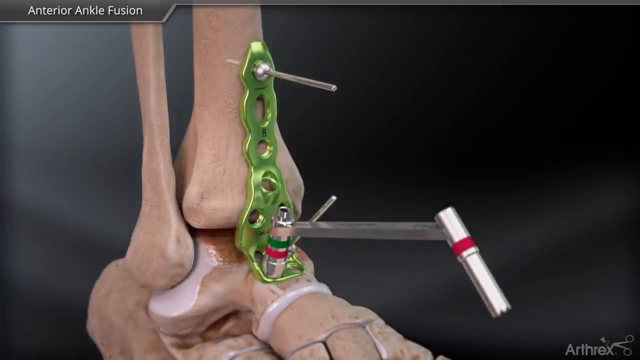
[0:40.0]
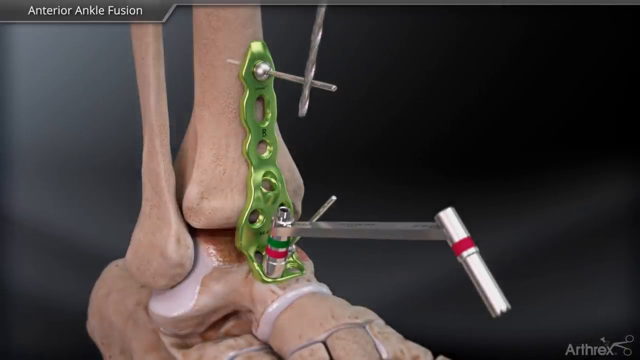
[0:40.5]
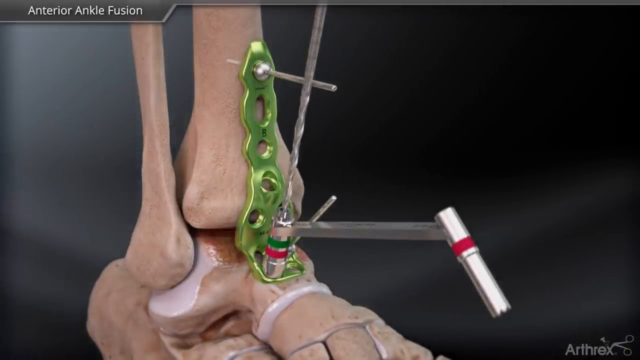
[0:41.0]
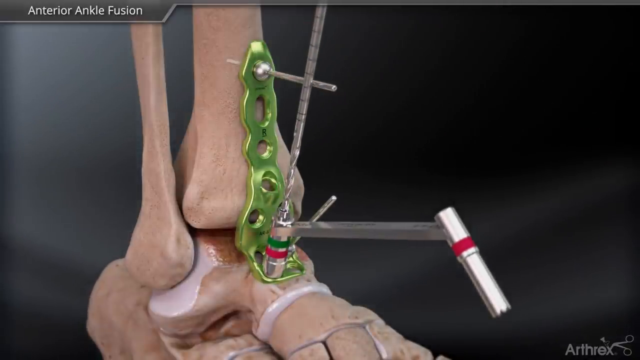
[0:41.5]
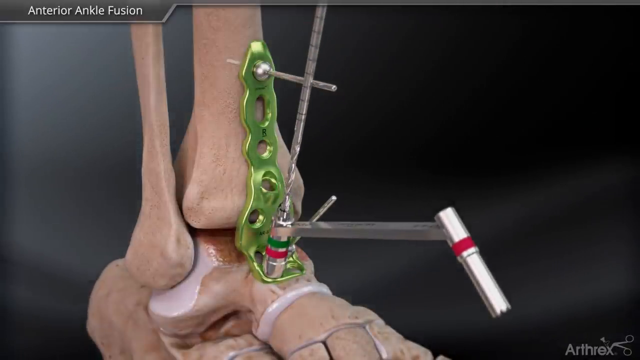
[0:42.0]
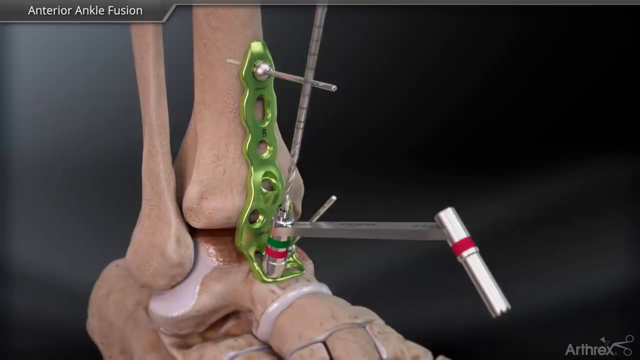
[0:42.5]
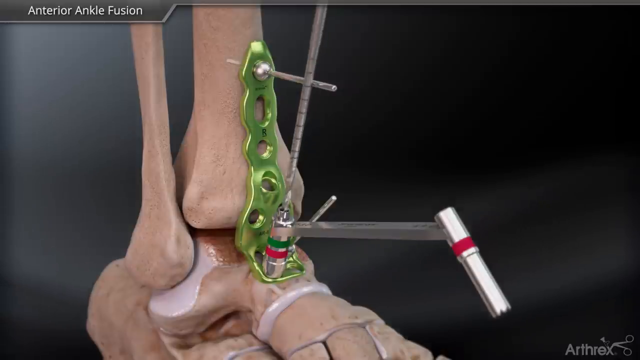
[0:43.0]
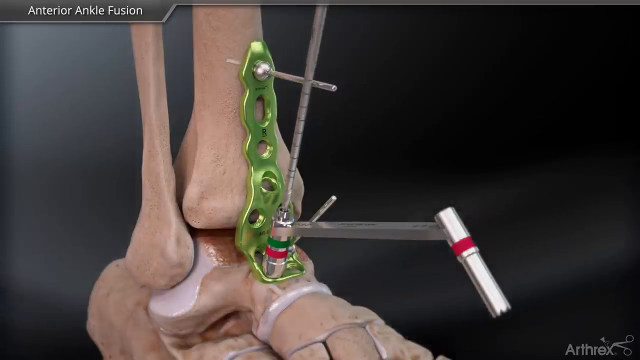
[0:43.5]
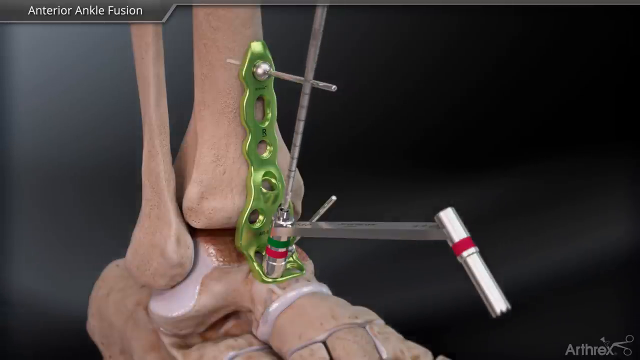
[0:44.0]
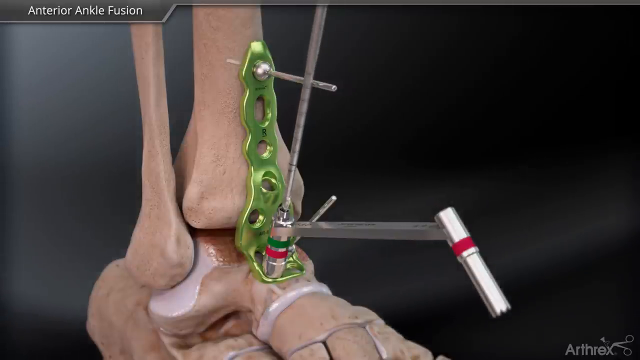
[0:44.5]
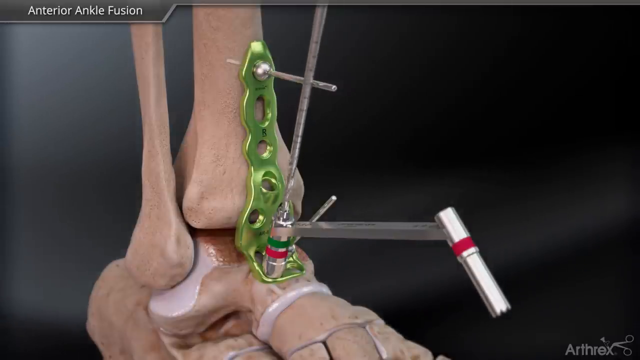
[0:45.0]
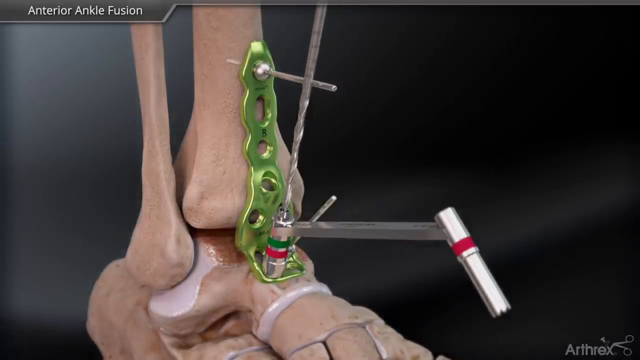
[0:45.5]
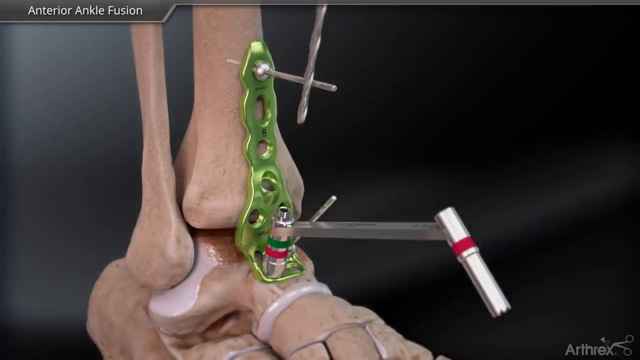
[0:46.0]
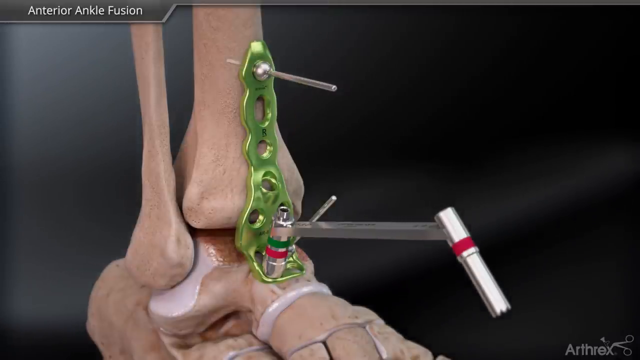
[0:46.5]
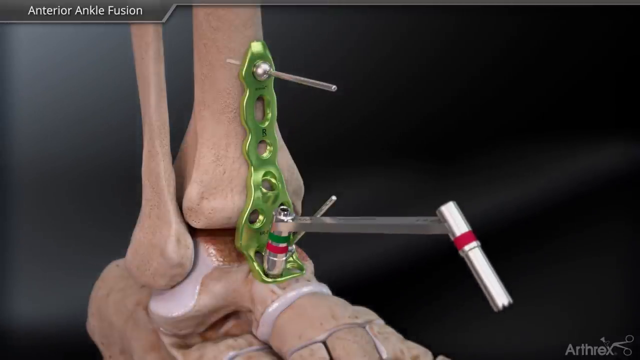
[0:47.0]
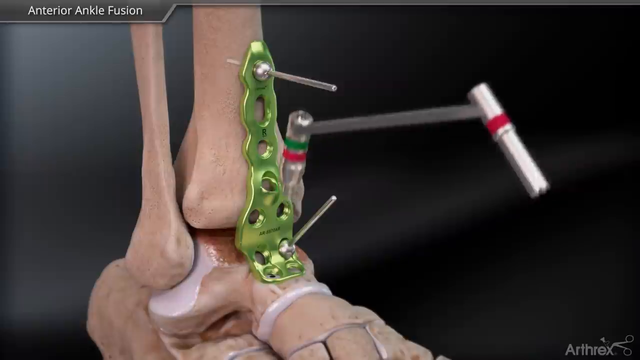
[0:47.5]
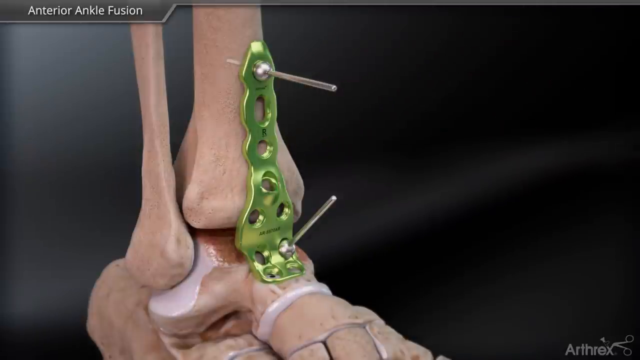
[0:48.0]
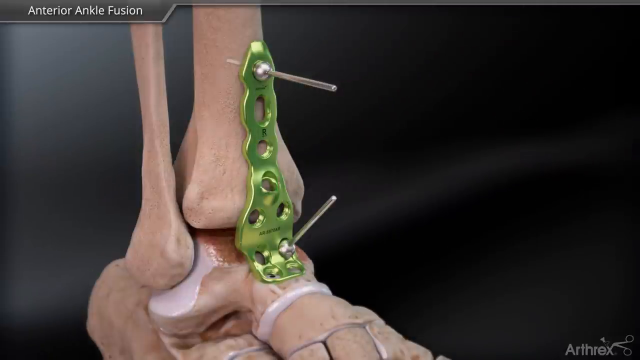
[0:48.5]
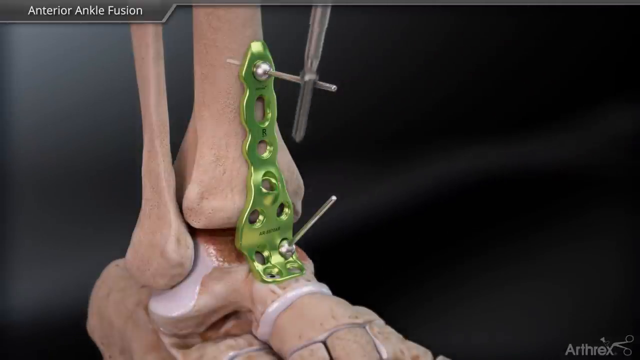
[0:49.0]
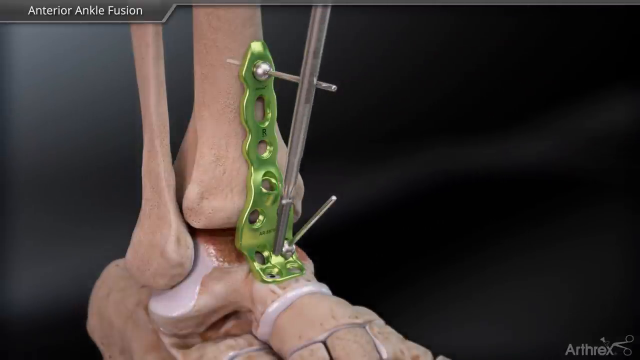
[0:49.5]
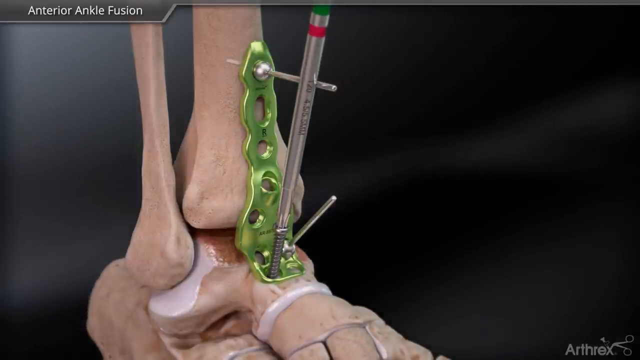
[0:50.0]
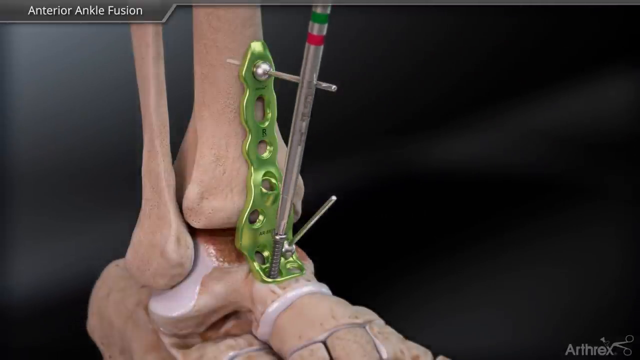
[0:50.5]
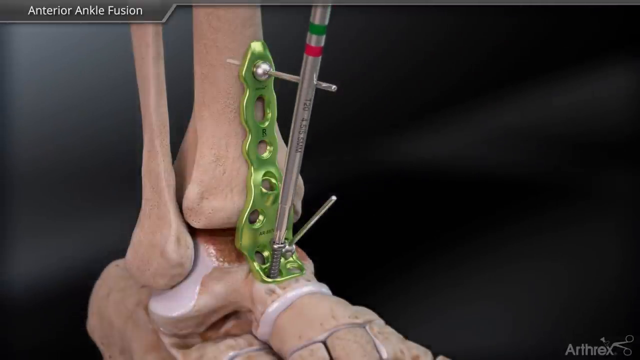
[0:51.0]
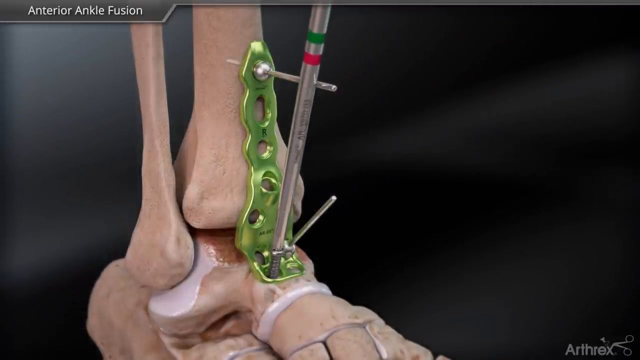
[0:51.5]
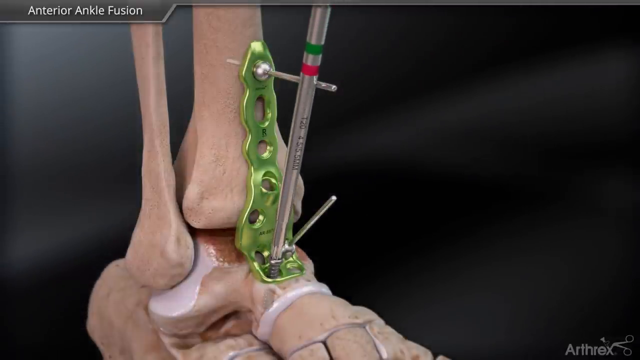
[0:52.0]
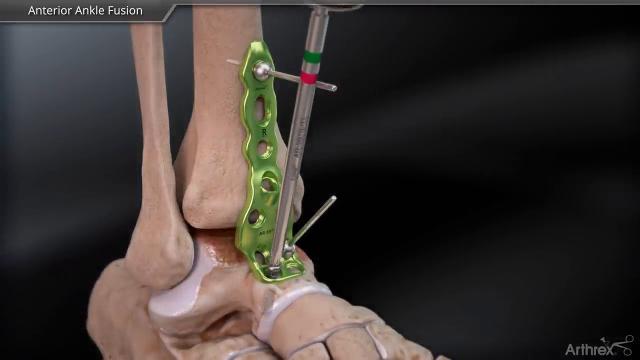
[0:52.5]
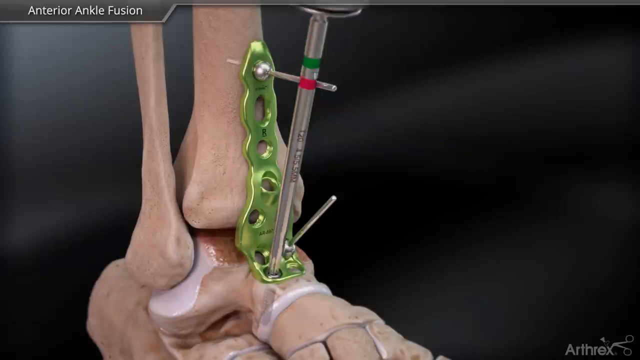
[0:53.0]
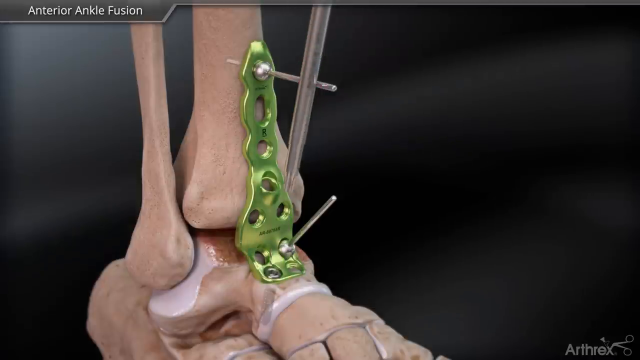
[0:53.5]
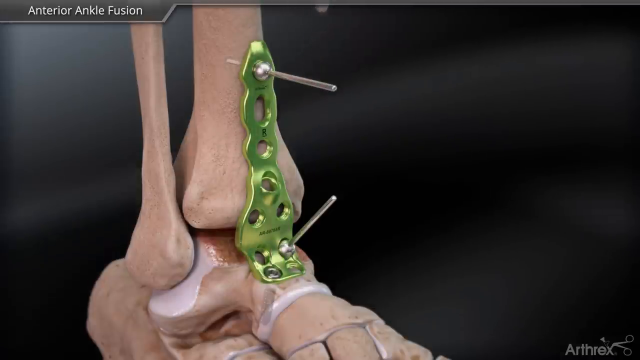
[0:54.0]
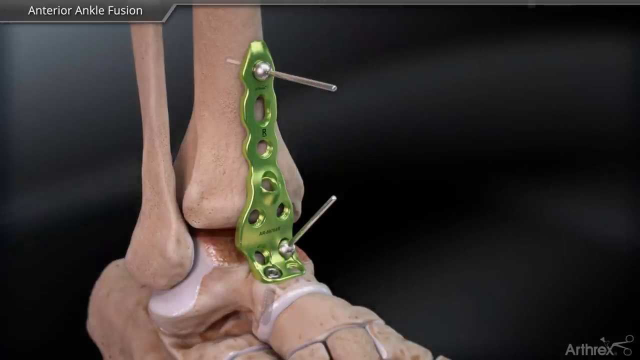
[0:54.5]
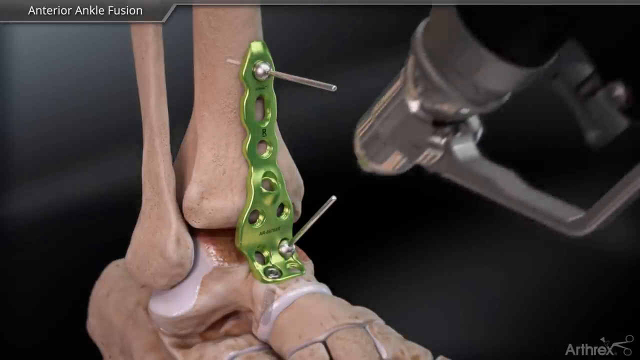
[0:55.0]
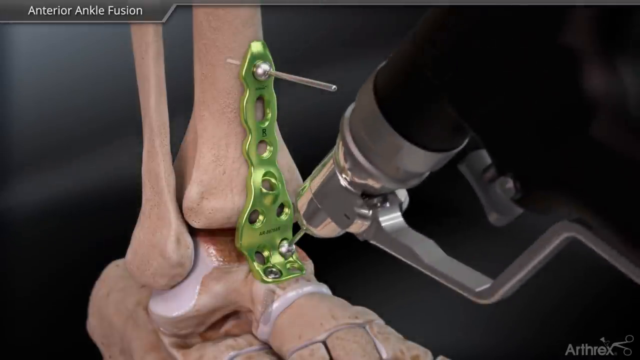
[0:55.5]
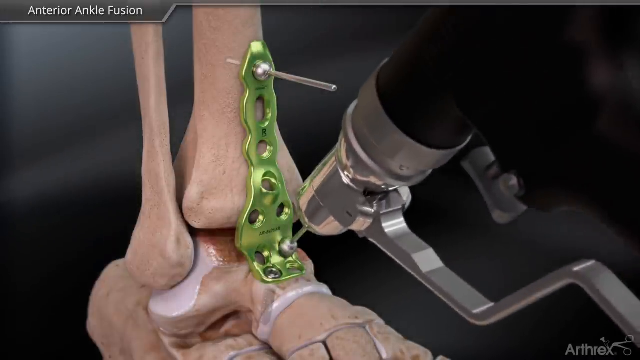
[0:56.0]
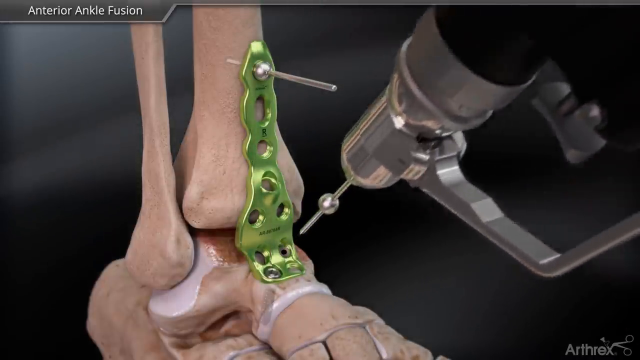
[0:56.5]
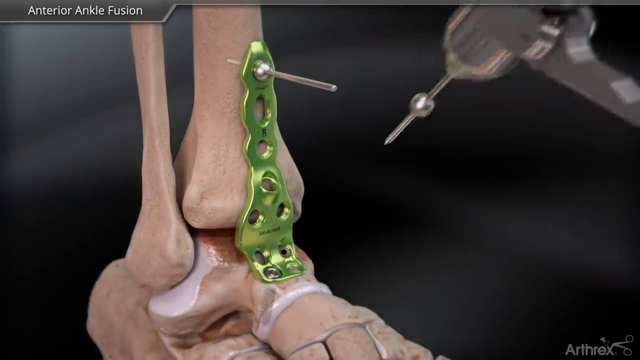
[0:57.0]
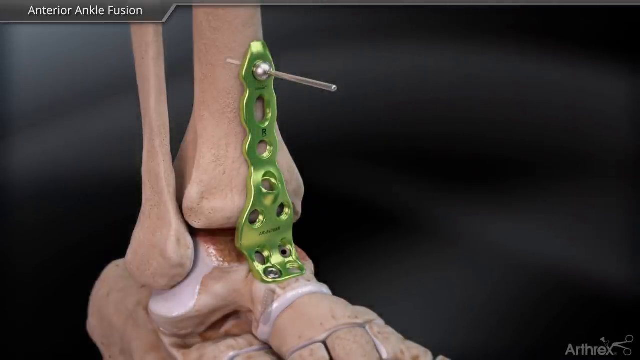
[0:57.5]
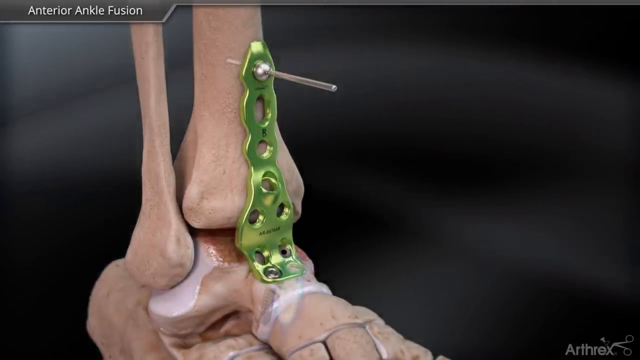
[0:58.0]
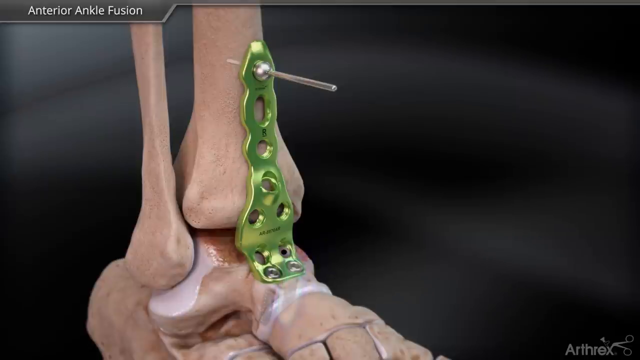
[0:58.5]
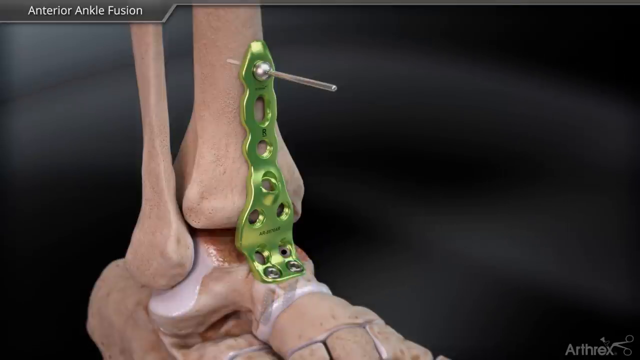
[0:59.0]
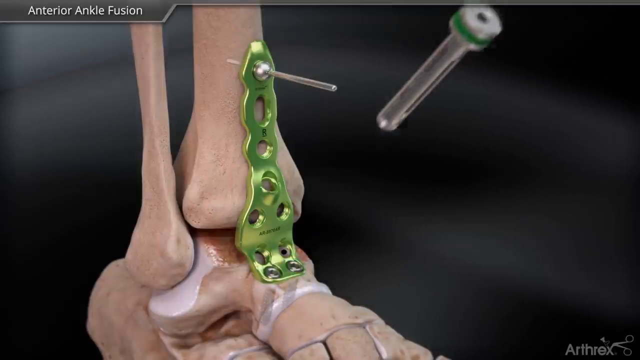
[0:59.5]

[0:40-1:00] A tightening device seems to be on the bottom of the bracket to make sure it stays in the foot. A rod is inserted through the top of the tiny bar and seems to be going into the foot or drilling a hole in it for another screw. The device is then removed, leaving a hole in the bottom, and another device screws a bolt into the foot. The drill-type apparatus removes the bottom screw on the other side of the foot before a larger instrument is inserted. The pin placed on top of the clamp initially is still visible inside the screw, possibly holding the top one so that the bottom of the ankle can be stabilized fully. The drill is much larger than a household drill and seems to have more power.